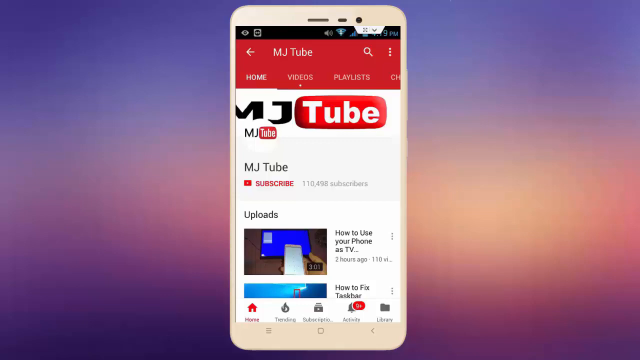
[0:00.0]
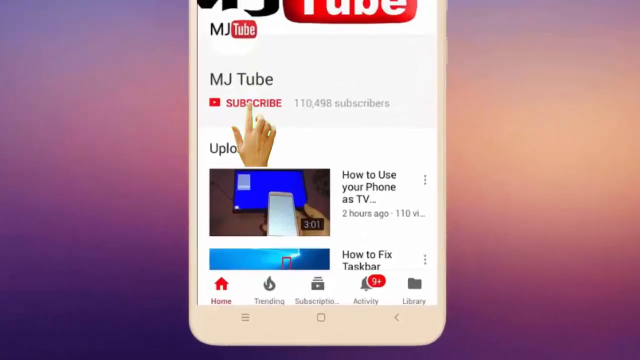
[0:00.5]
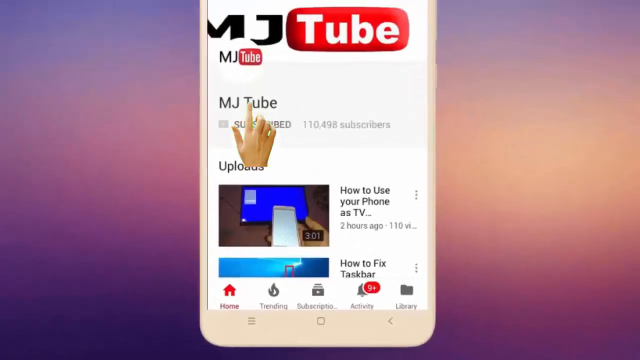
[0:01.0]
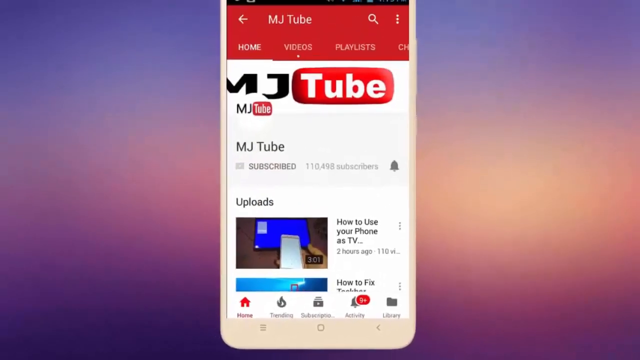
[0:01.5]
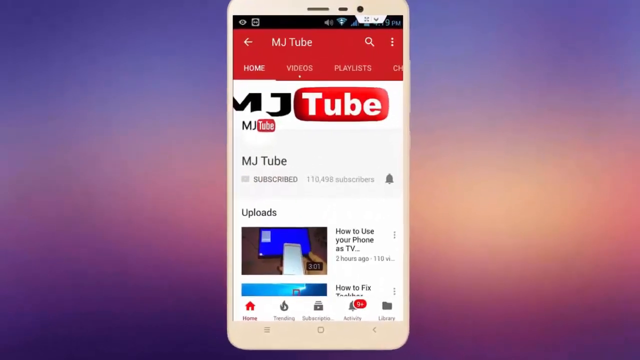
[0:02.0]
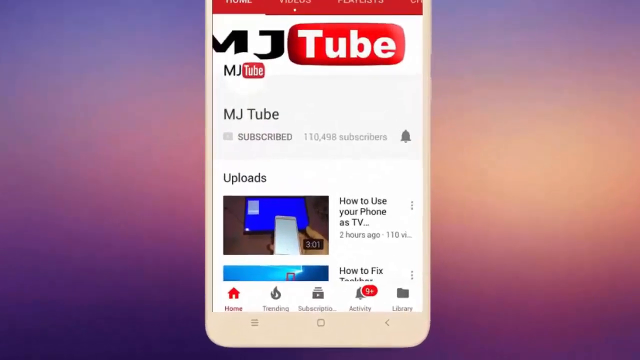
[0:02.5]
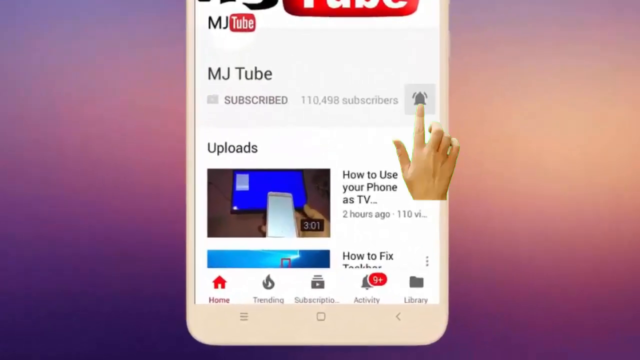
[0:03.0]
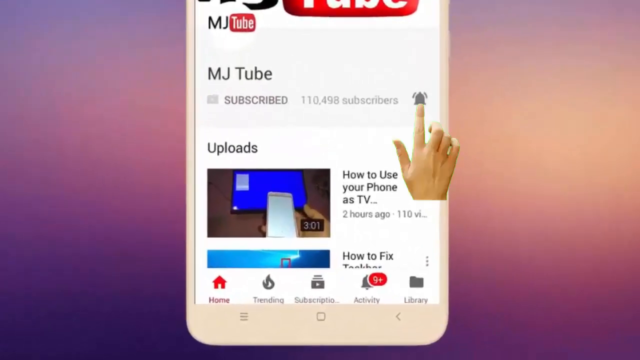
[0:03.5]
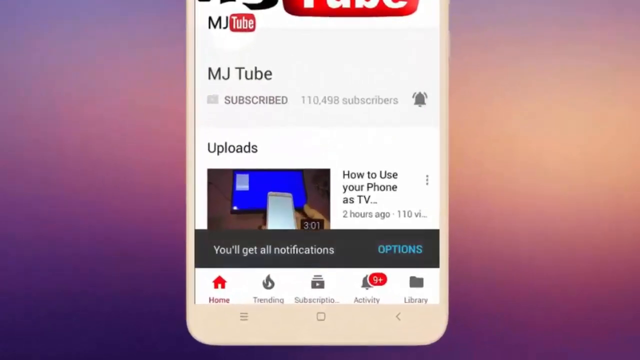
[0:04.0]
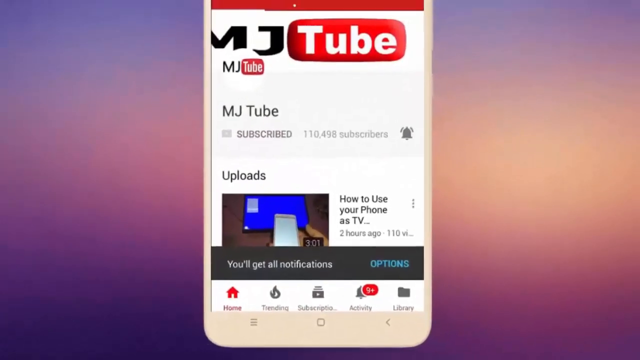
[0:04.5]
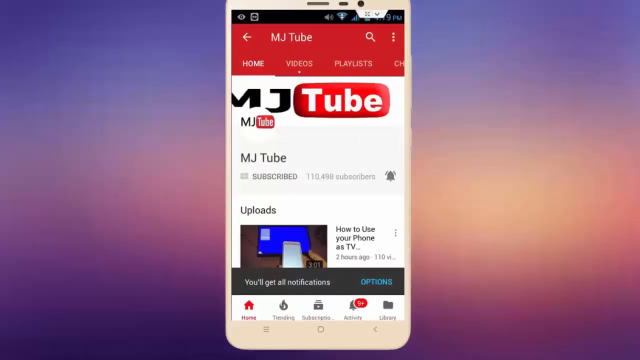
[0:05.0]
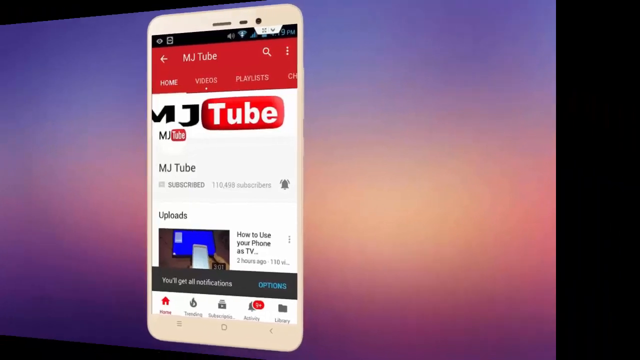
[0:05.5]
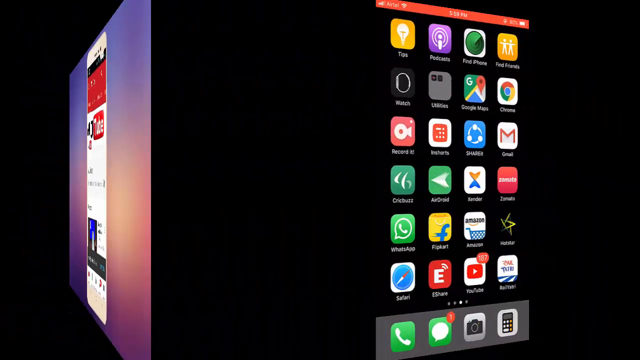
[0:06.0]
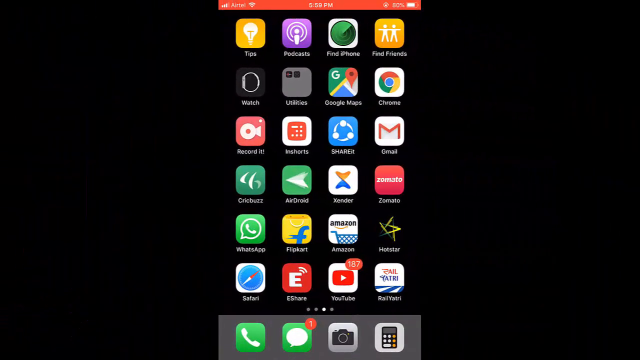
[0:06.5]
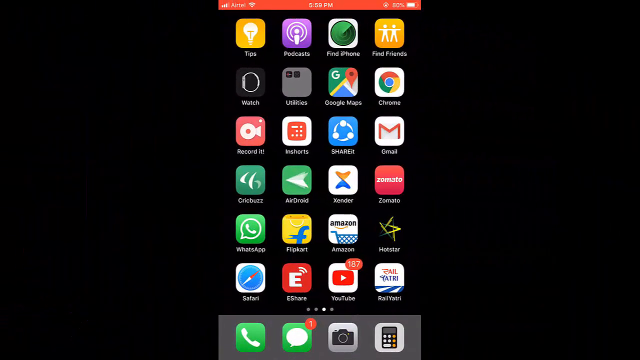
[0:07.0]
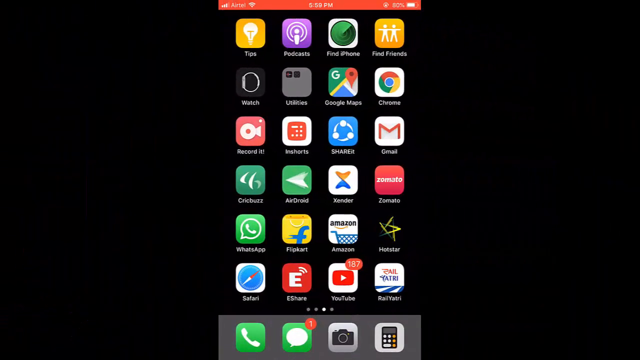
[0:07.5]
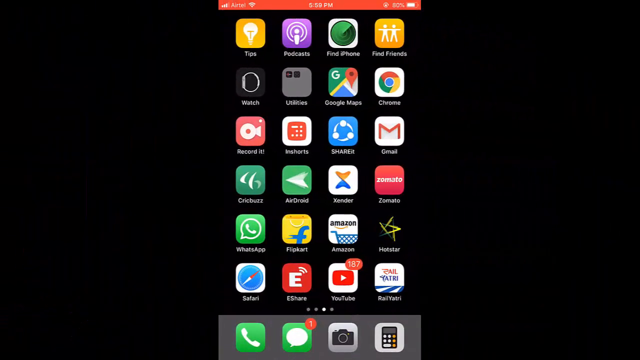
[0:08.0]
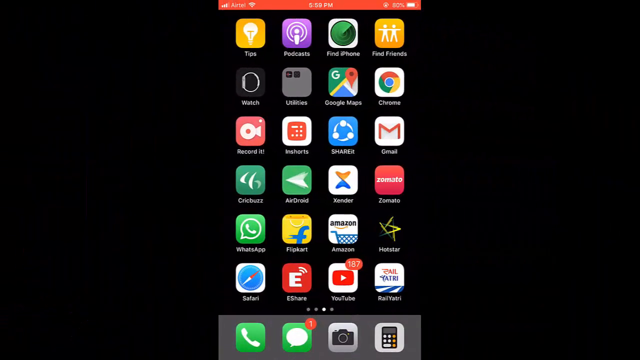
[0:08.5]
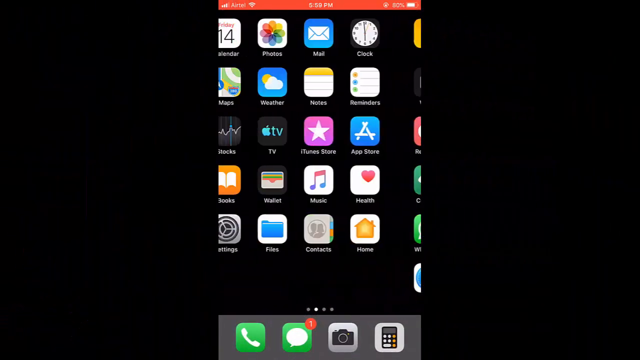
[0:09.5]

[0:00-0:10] A purple and orange gradient background has a phone in its center, which appears to be an iPhone mock-up. On it is a YouTube channel called MJTube, whose logo is made to look like the YouTube logo. The camera zooms down and a hand appears with its finger outstretched, clicking the subscribe button; the wording changes to subscribed and is then grayed out. The camera zooms out, then zooms in again. The hand reappears with the finger pointing at the notifications icon, depicted as a bell. A grey banner appears at the bottom of the screen stating that notifications are now enabled. The screen transitions to many different icons for various apps, and the user moves through the pages of apps.